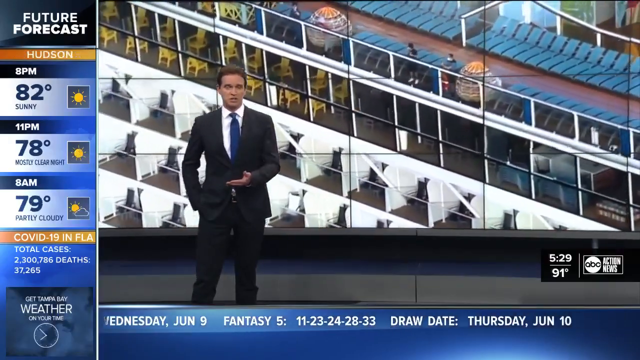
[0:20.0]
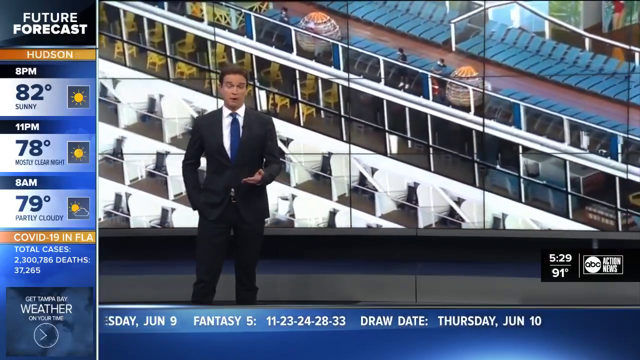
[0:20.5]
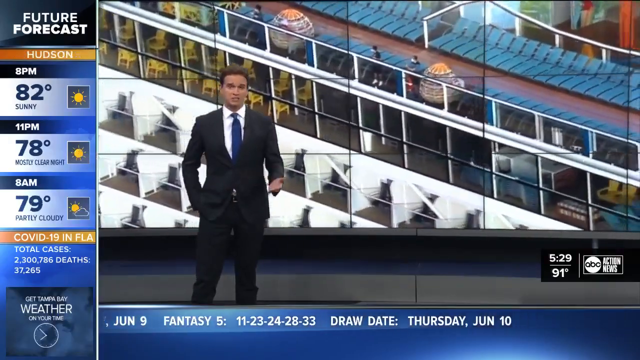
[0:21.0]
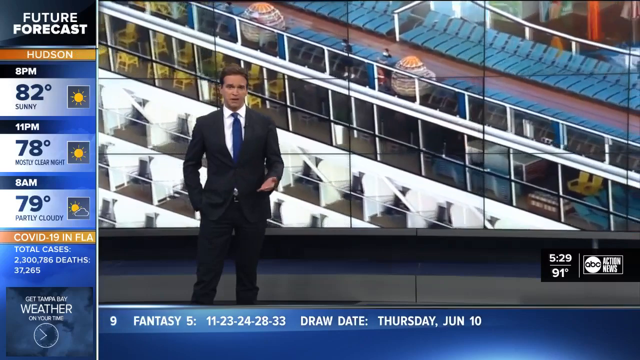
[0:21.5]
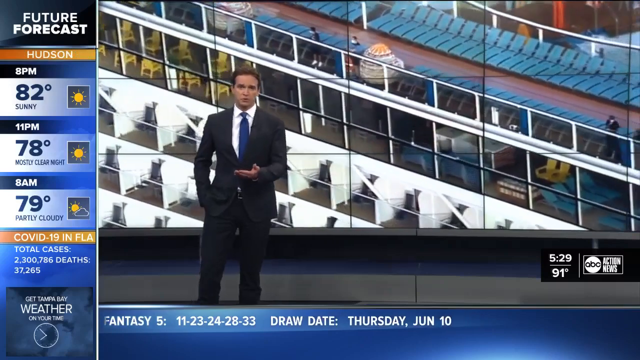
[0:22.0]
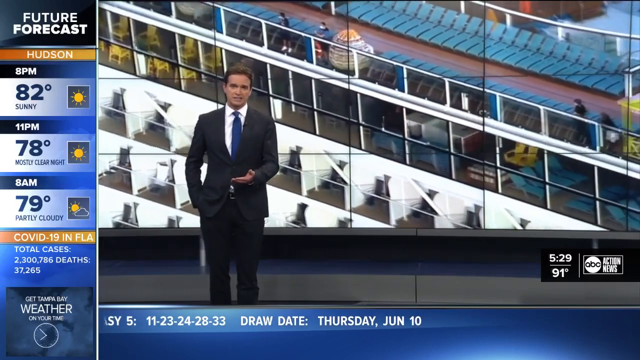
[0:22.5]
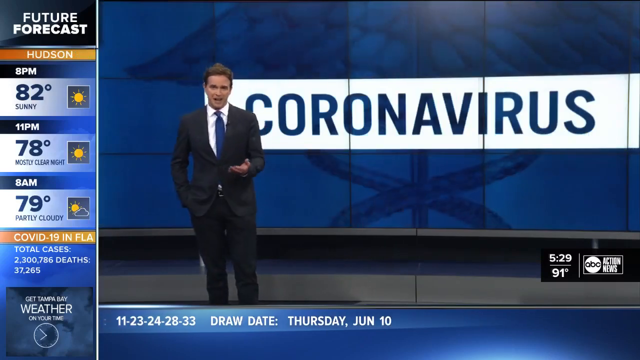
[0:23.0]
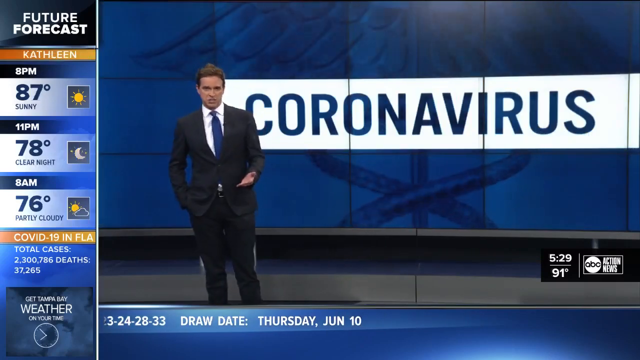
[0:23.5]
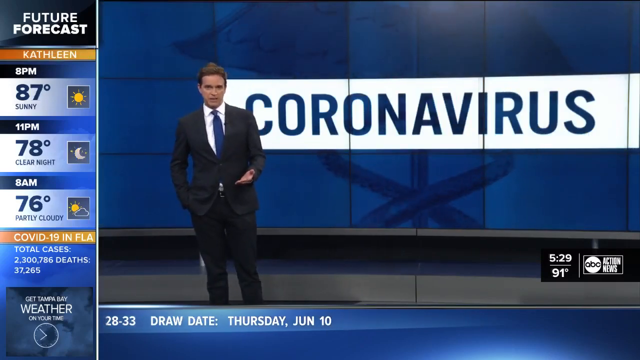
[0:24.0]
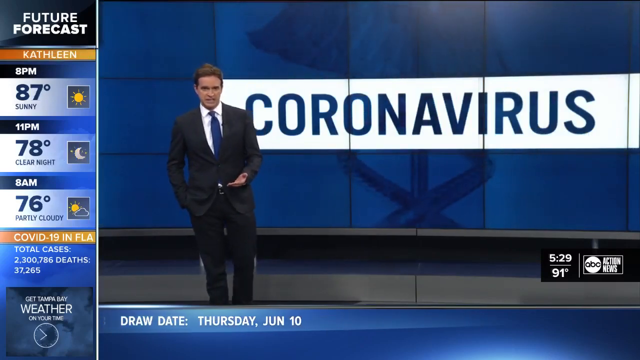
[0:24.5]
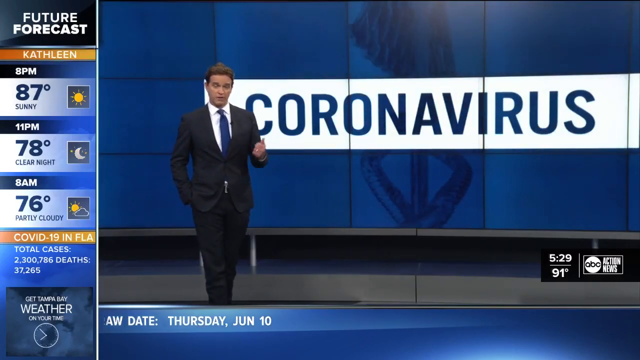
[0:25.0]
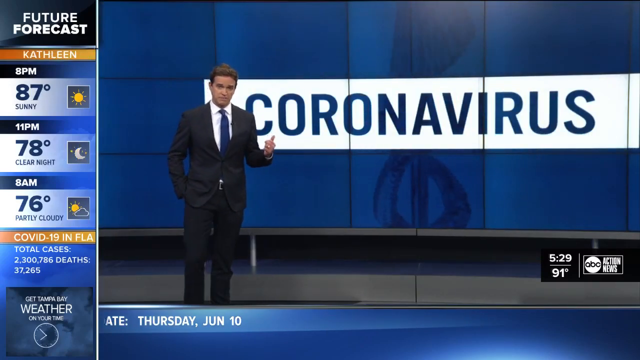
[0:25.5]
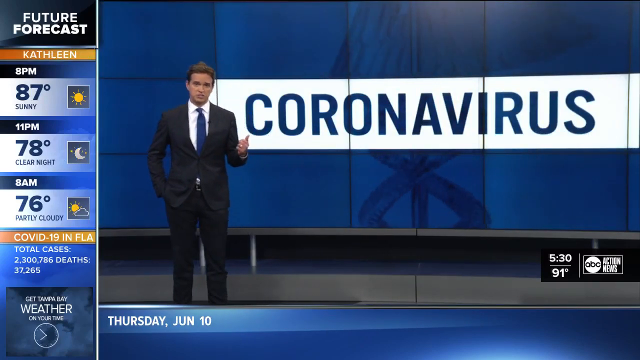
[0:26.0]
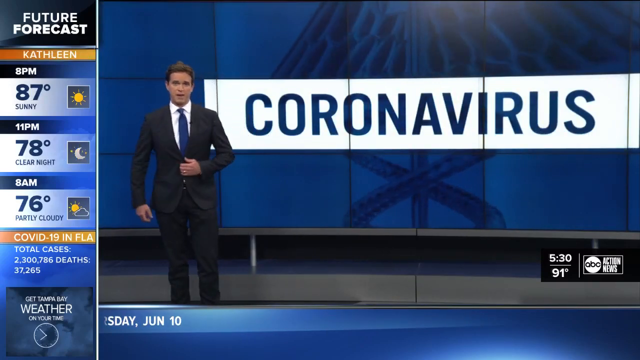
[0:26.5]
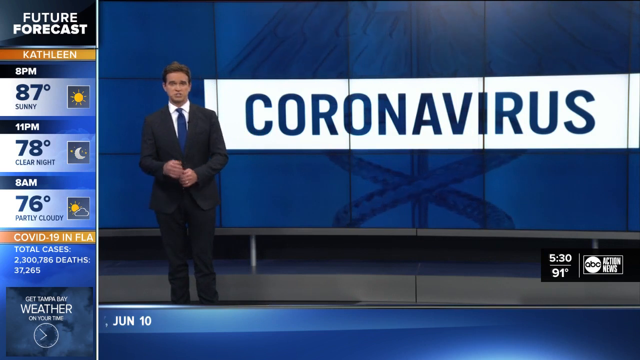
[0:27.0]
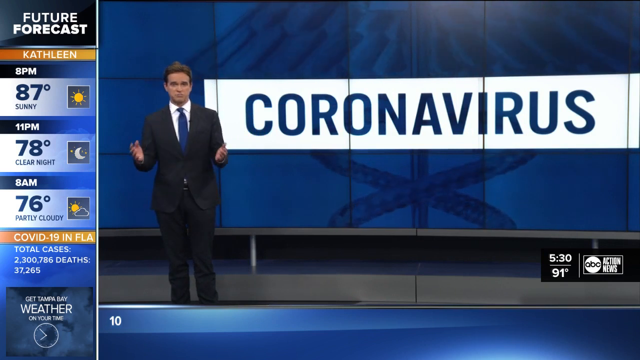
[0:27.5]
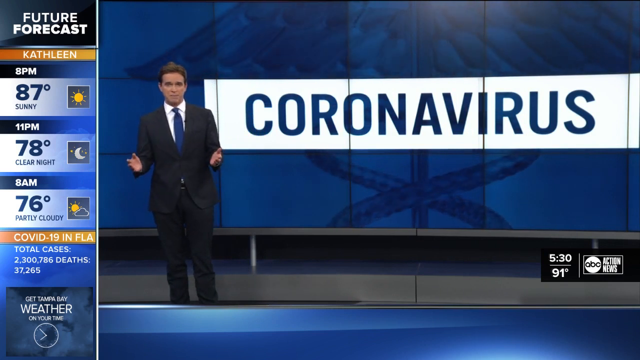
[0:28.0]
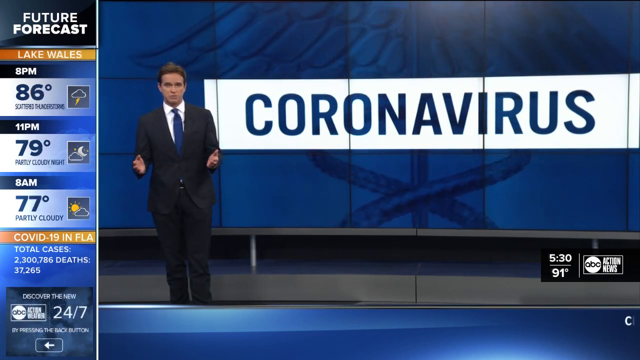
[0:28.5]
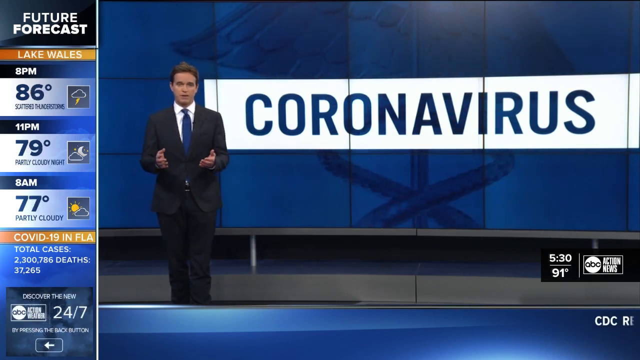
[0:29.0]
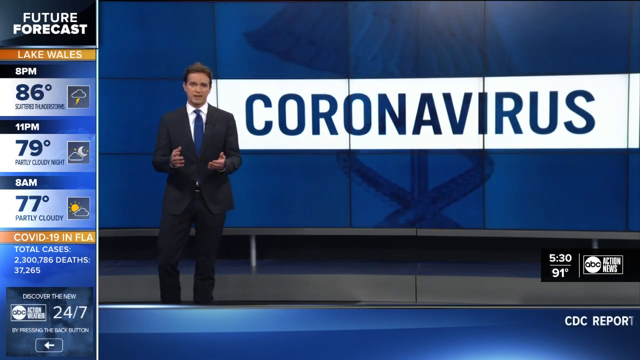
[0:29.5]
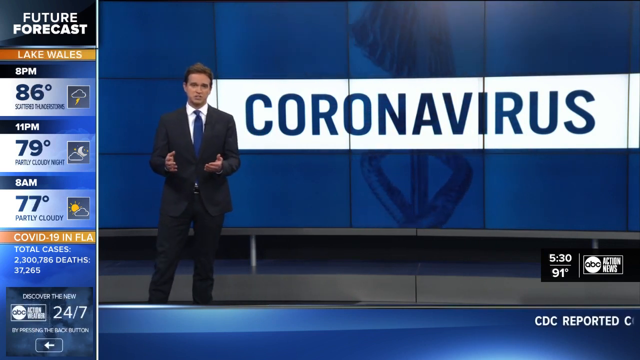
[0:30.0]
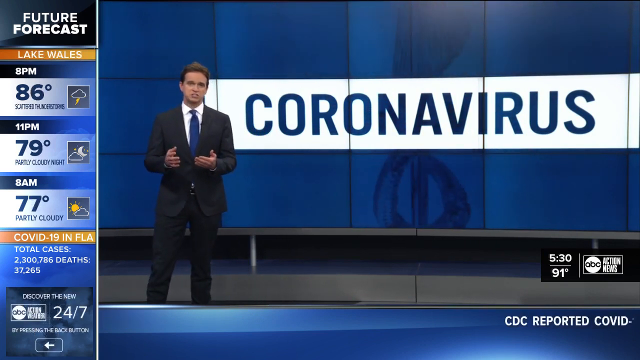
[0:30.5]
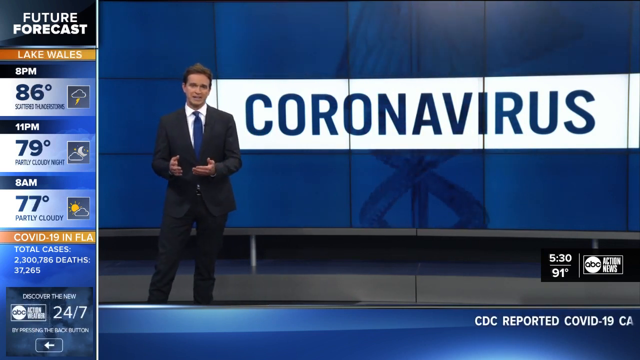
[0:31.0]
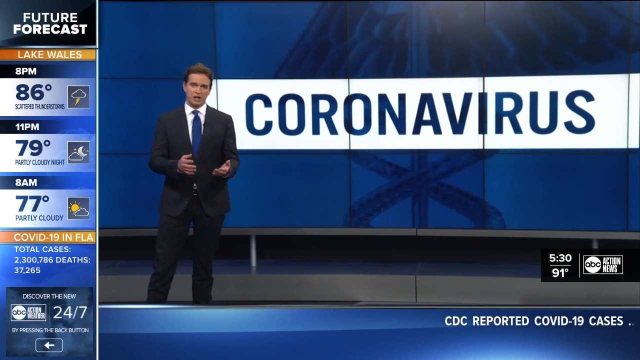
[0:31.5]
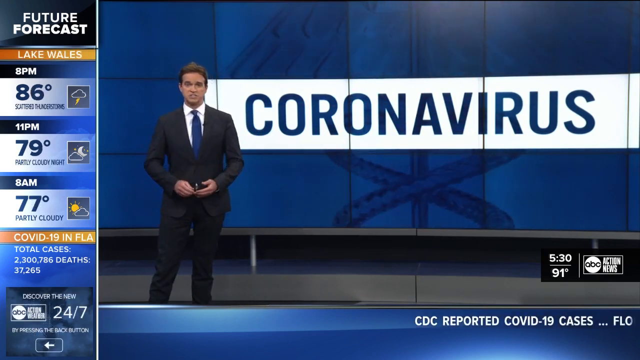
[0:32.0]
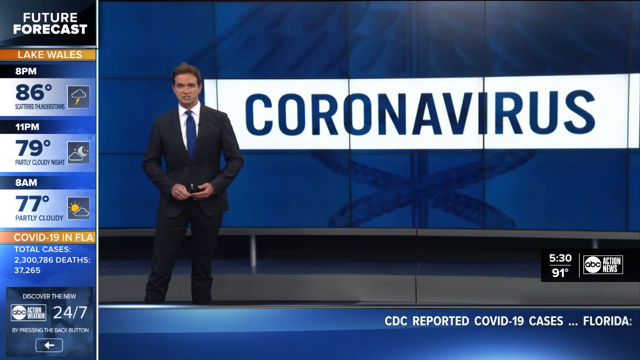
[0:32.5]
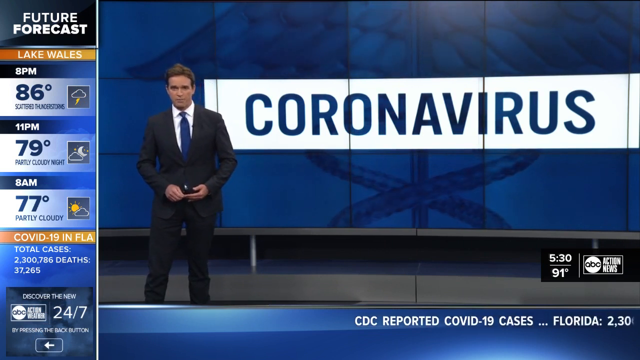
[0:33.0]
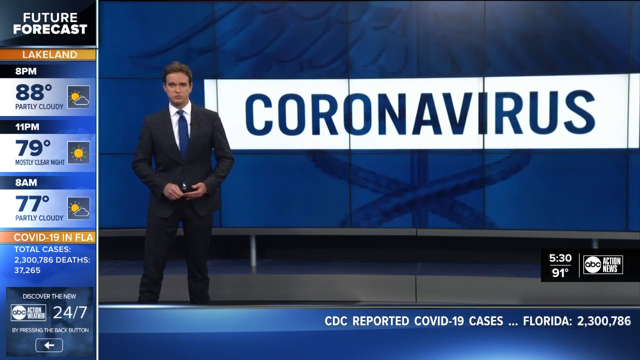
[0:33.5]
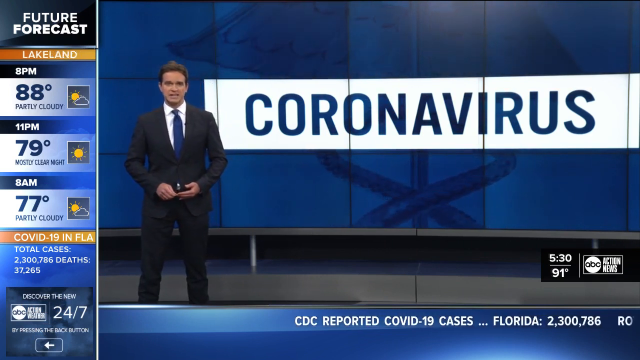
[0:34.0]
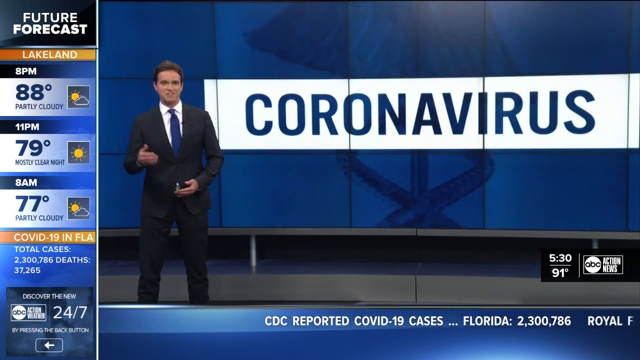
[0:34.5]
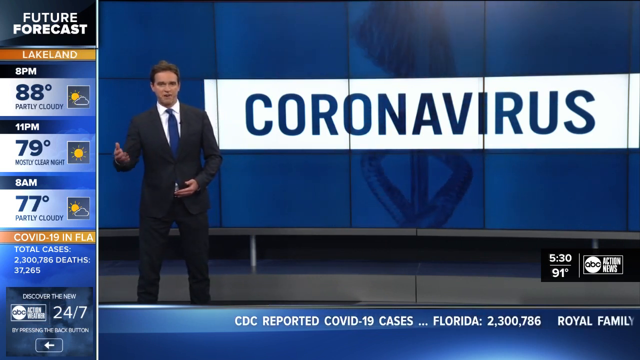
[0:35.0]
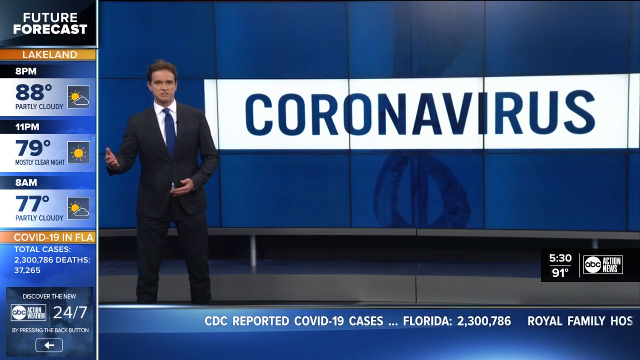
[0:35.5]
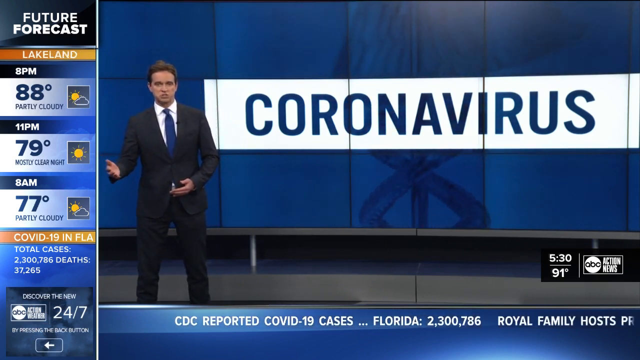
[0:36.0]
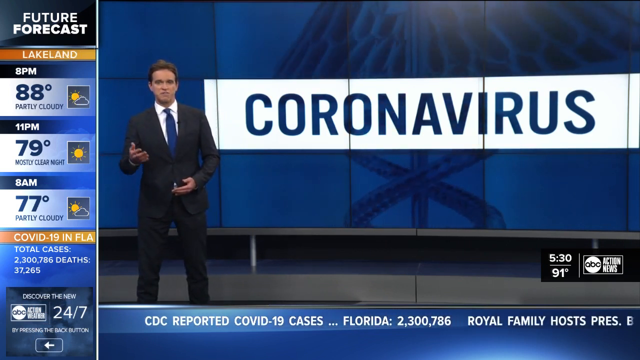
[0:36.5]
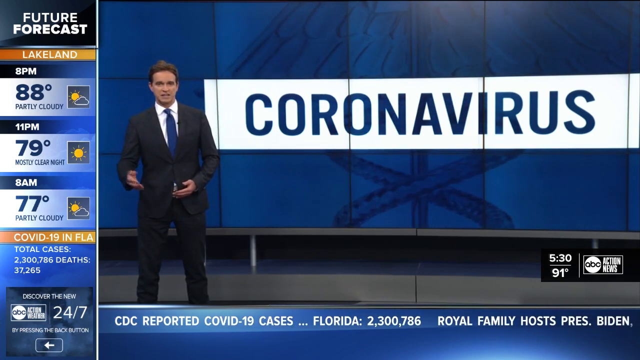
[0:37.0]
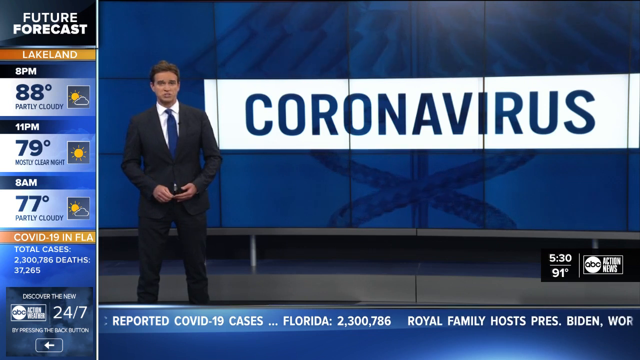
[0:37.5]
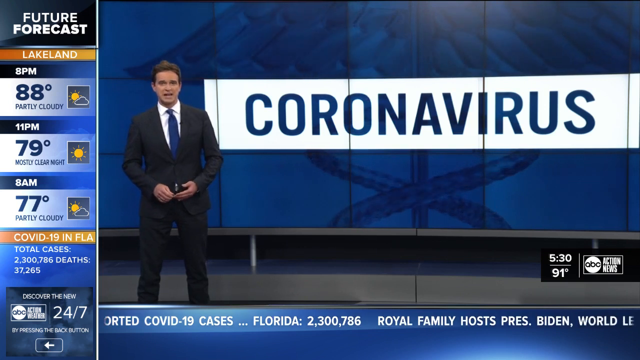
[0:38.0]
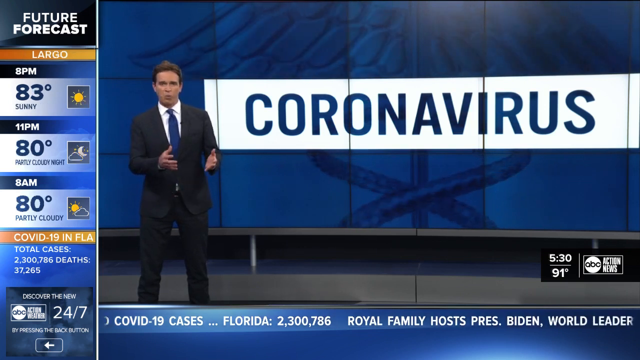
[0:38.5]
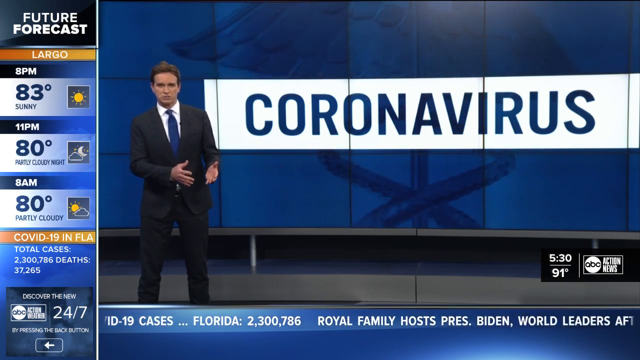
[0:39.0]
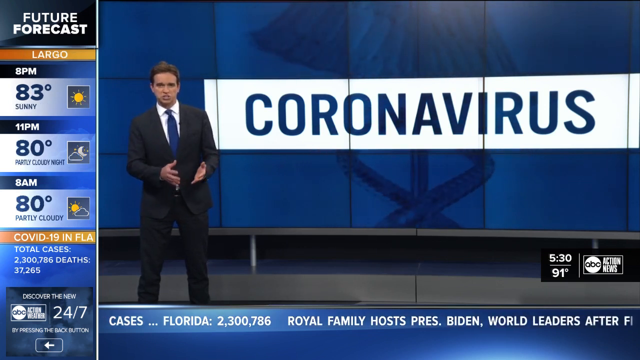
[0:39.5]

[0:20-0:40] At the start, the top of the ship is shown, with many apartments that look white and what appears to be a lounge area on top. The news anchor, in the grey suit, white shirt and blue tie, stands with one hand in his pocket and the other visible. He then takes his hand out of the pocket and moves both arms as he speaks, while the text "coronavirus" in bold blue letters on a white background appears on the monitors behind him, to his right. The monitors in the back are joined together so closely that any image on them looks like one big image, and the set looks very modern.